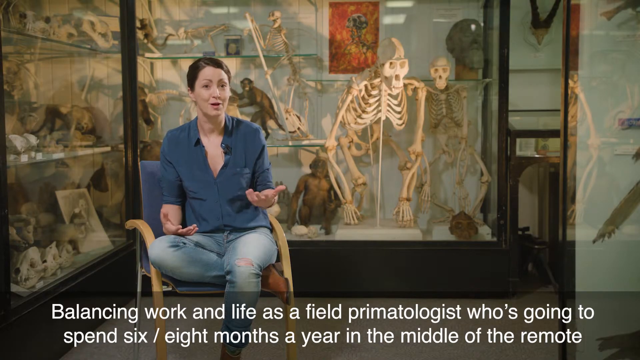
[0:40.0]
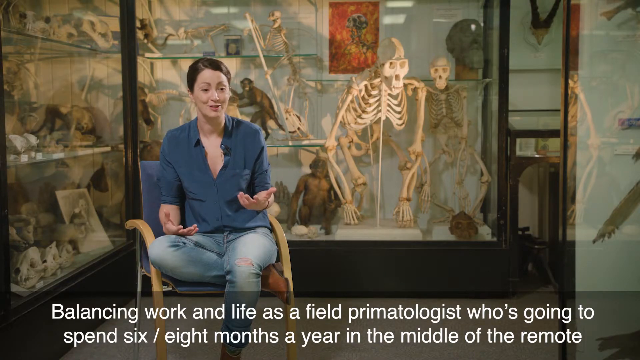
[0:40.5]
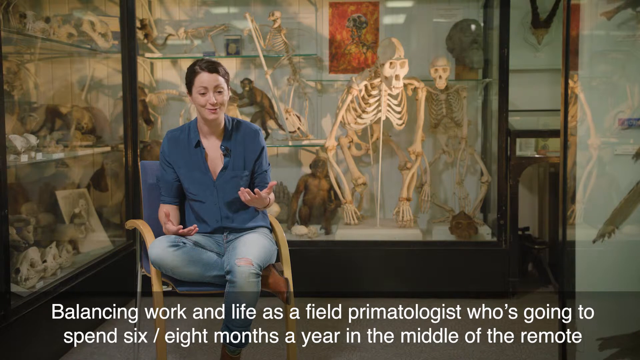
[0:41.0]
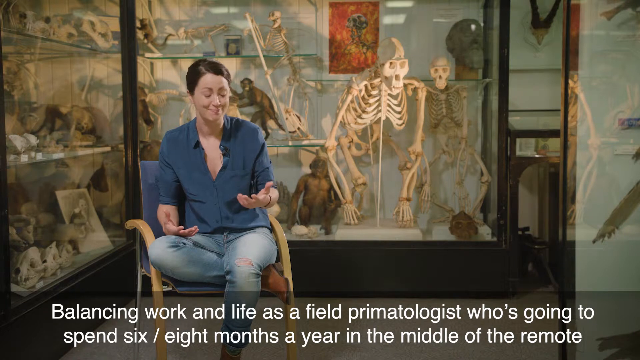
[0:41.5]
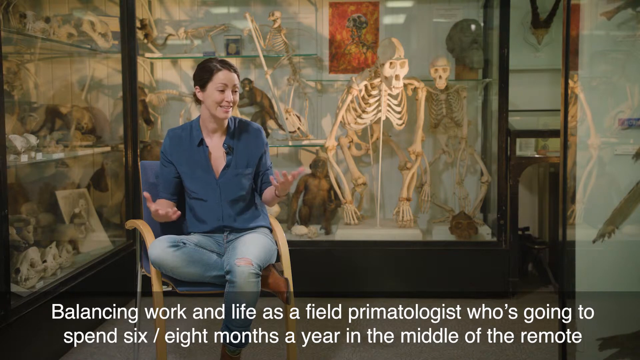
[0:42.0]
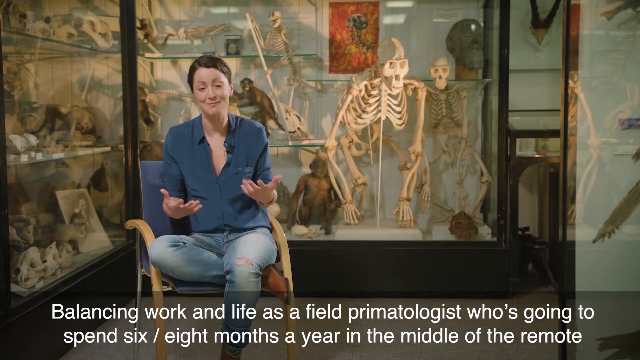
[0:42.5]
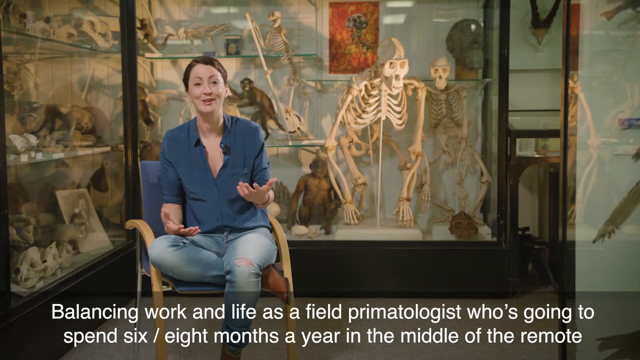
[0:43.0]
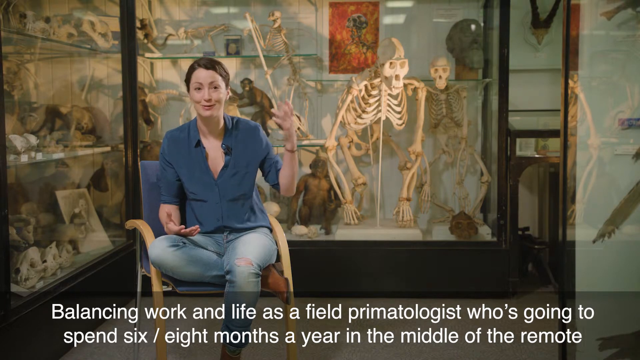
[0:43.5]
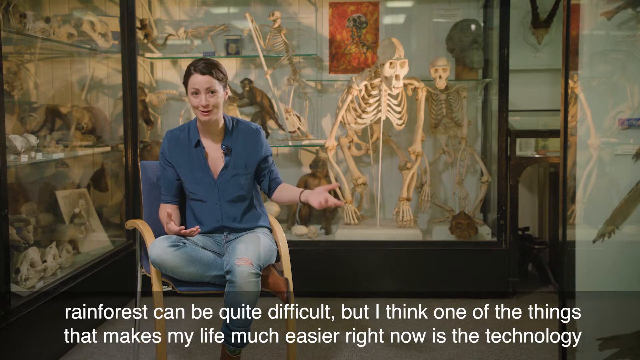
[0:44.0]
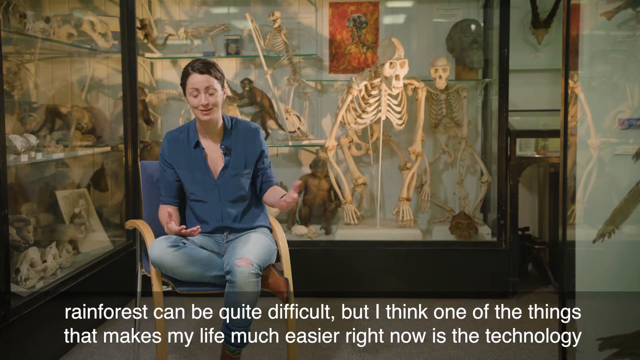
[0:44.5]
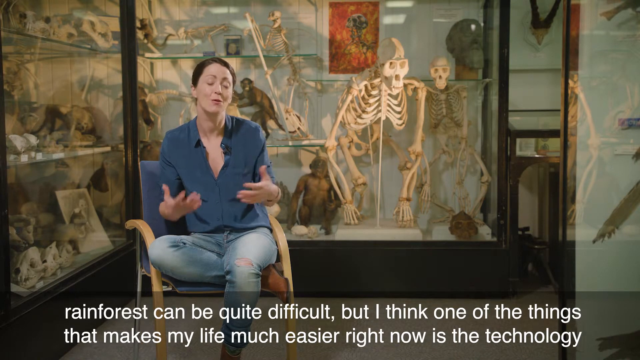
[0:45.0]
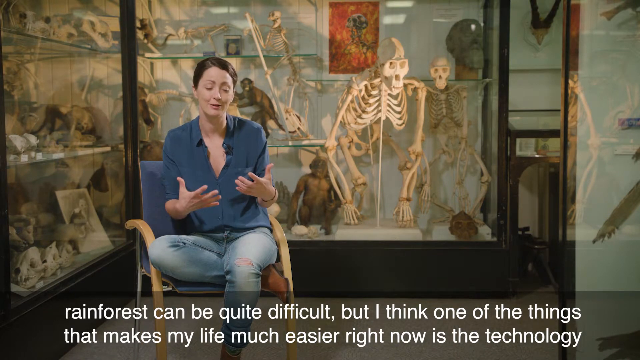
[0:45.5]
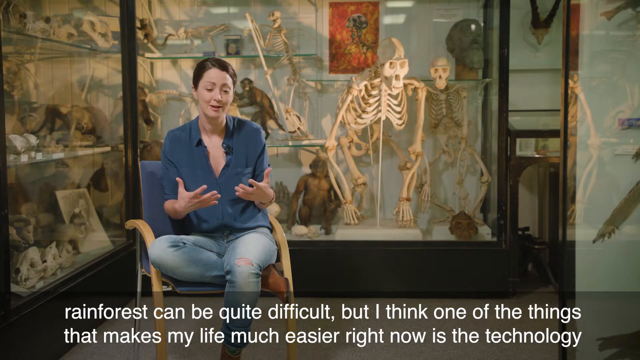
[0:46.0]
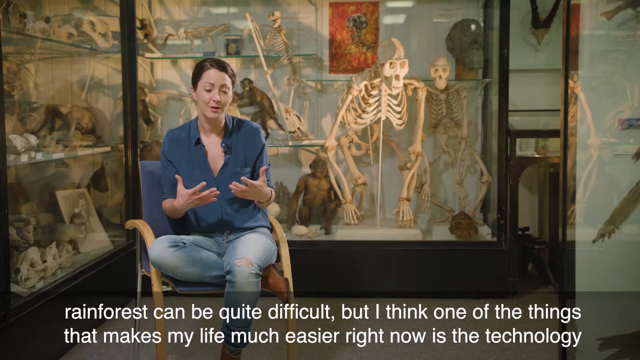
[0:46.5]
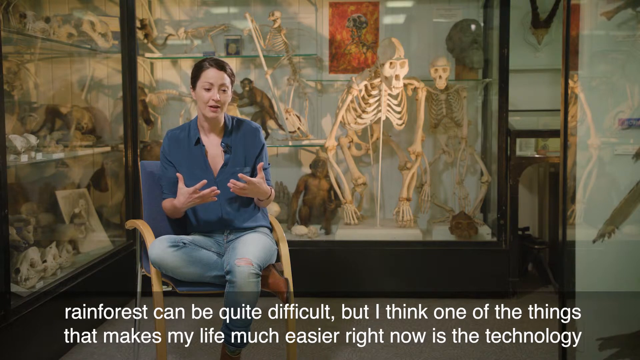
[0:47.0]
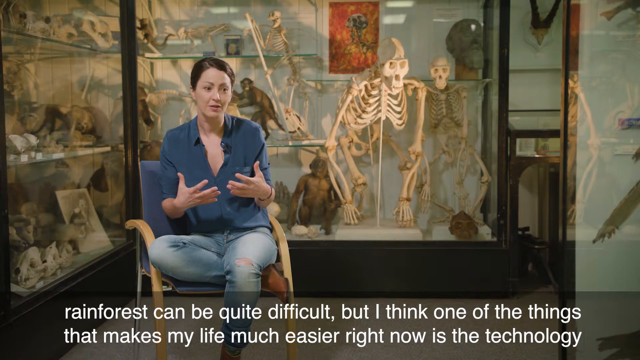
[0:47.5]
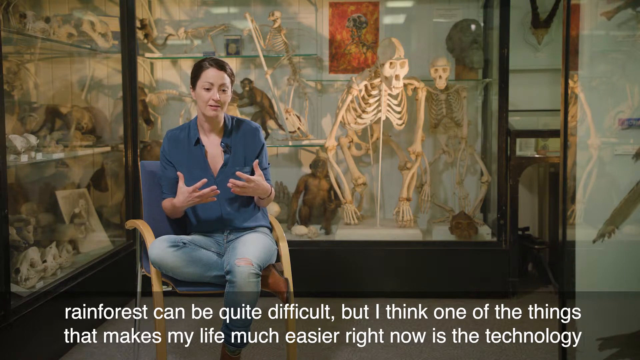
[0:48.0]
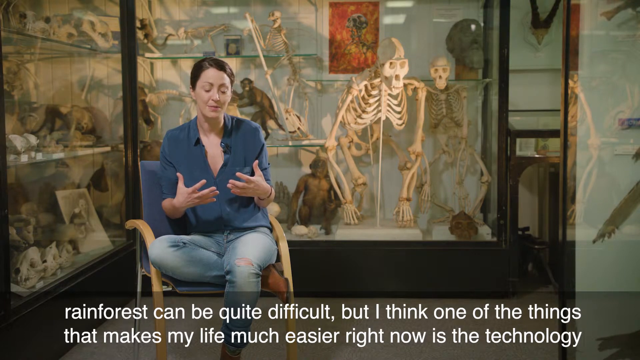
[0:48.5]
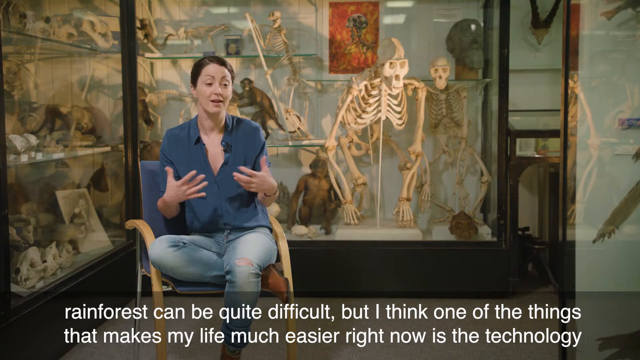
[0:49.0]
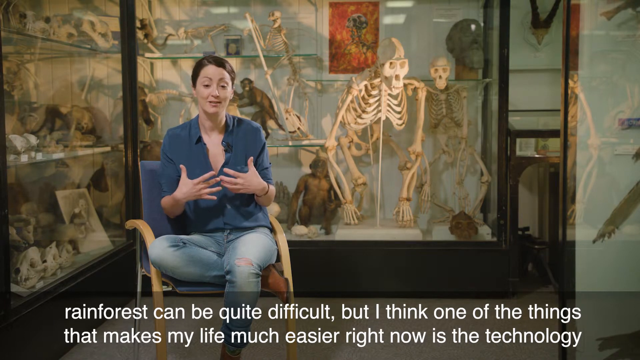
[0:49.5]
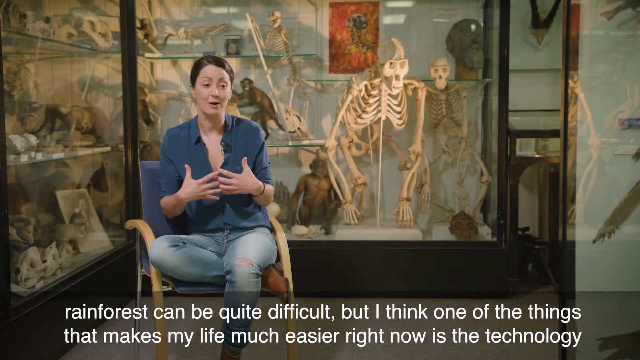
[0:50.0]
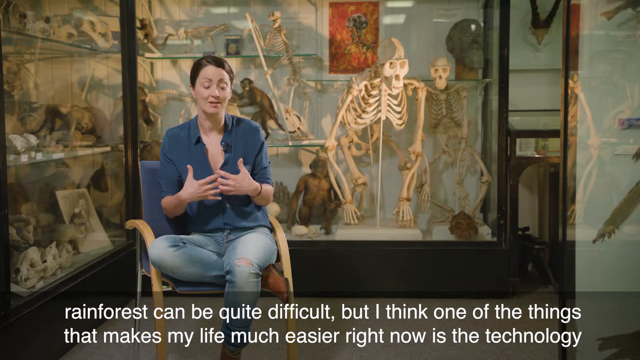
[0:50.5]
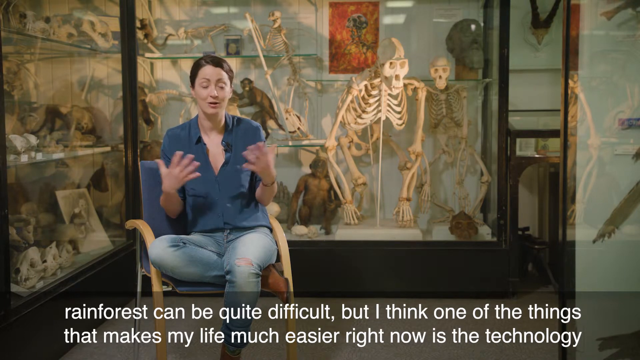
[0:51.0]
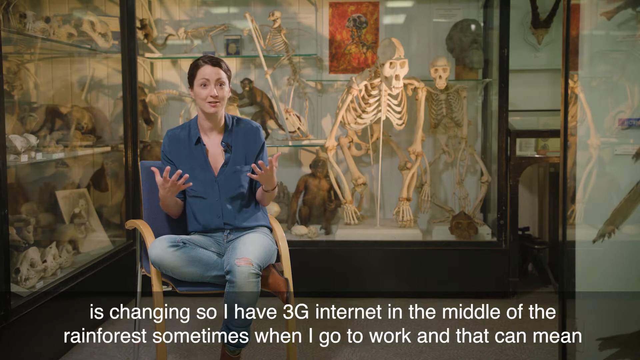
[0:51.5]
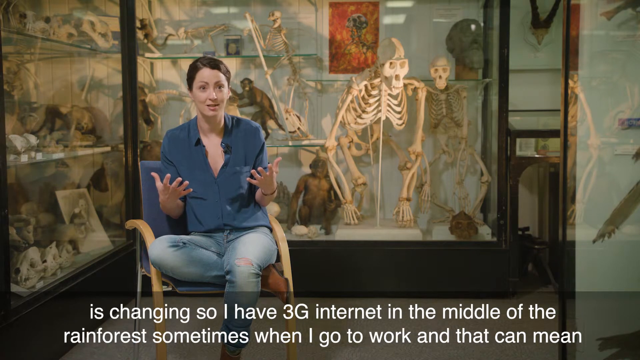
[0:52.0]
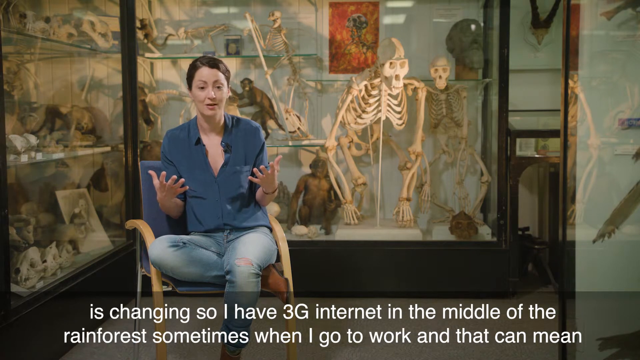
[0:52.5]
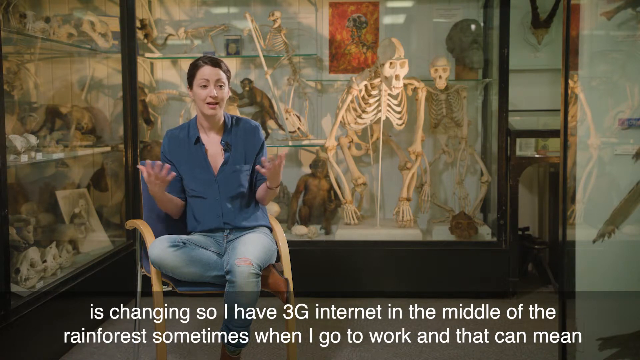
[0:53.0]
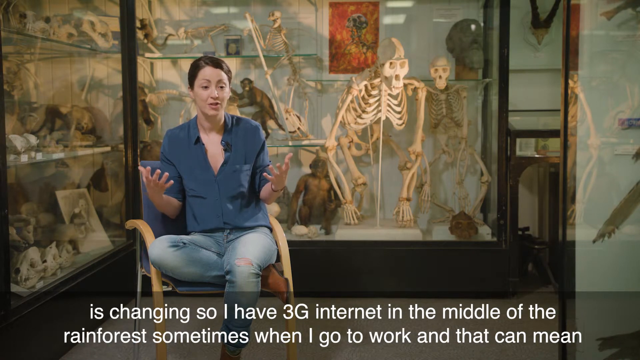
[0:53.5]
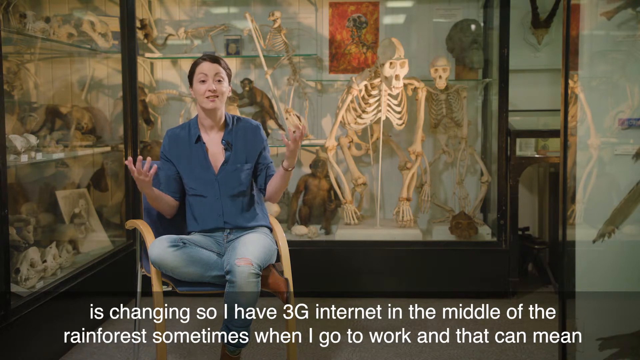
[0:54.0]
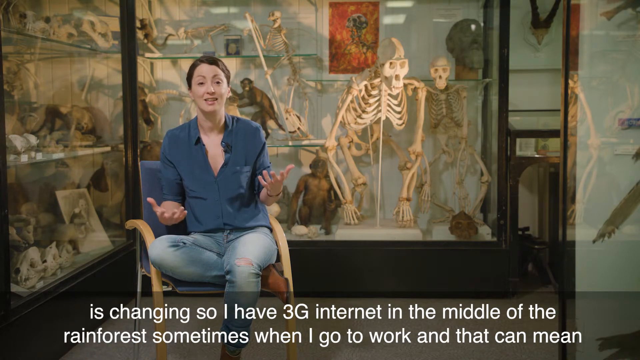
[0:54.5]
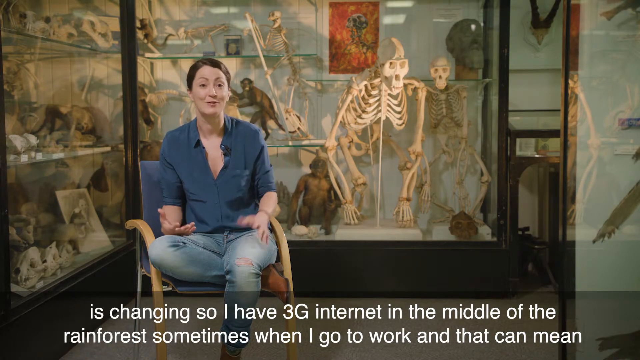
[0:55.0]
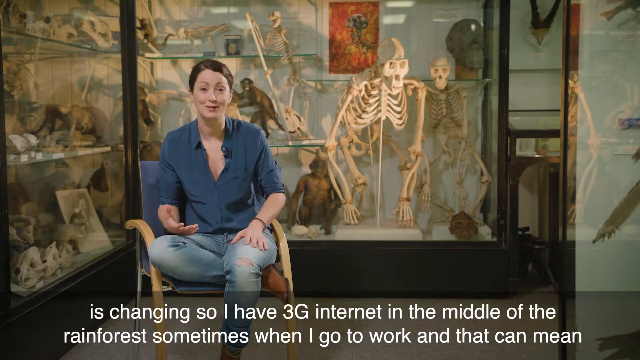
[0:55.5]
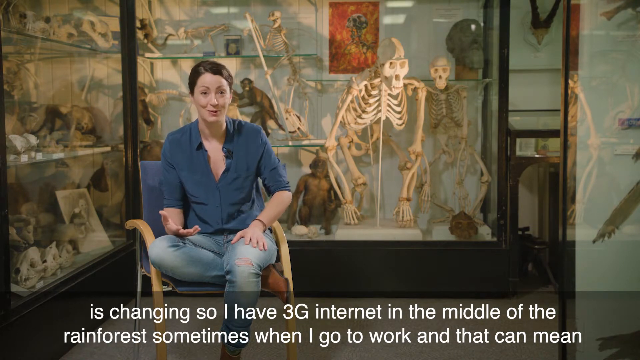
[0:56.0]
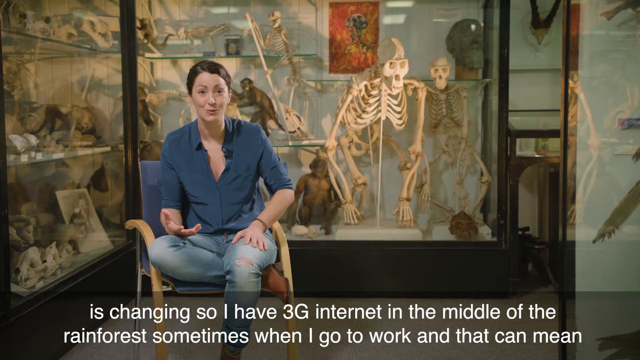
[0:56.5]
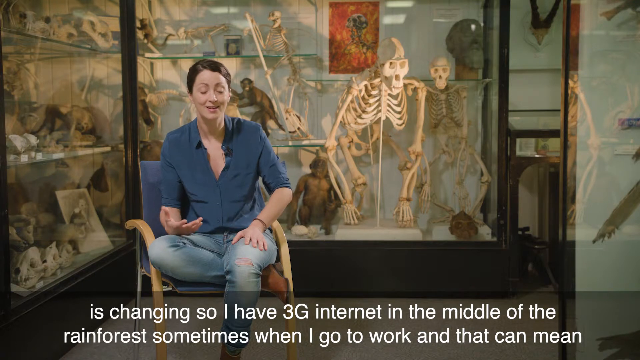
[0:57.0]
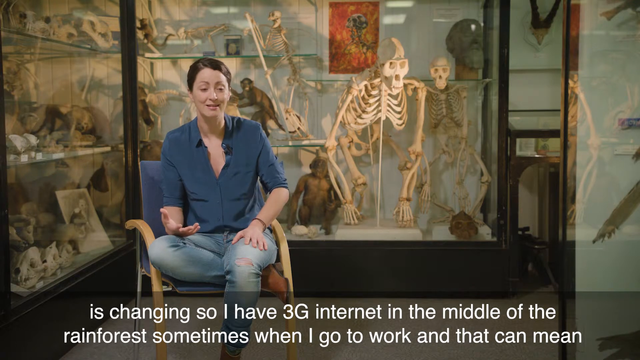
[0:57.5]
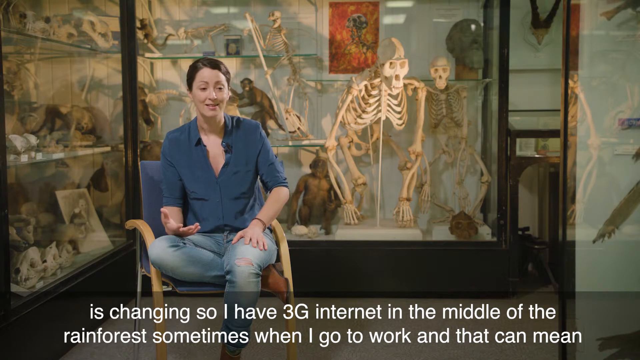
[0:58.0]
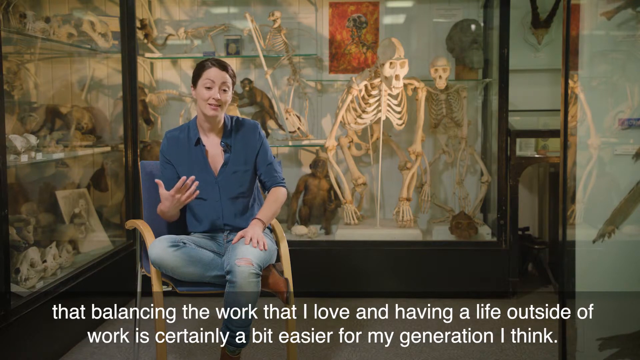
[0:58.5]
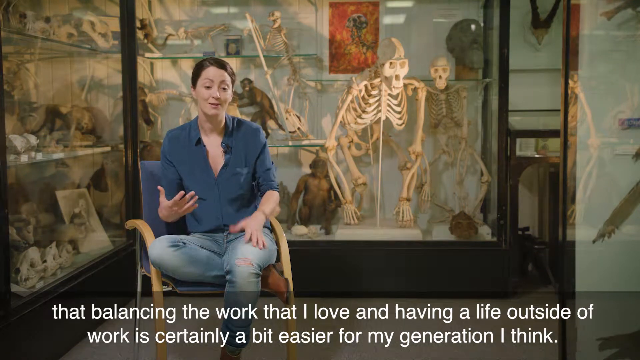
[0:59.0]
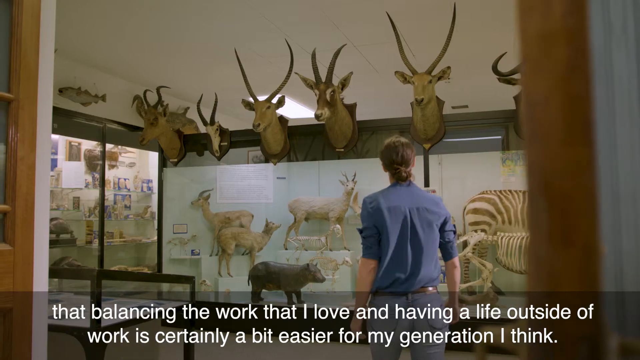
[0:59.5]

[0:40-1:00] A woman sits in a blue chair wearing a blue shirt, blue jeans, a black wristband on her left wrist and brown shoes. She has short brown hair with a hairband. Behind her is a display showing the bones and stuffed bodies of various apes and monkeys. A partially transparent dark gray text box at the bottom holds white text reading "Balancing work and life as a field primatologist who's going to spend six \ eight months a year in the middle of the remote". She seems excited as she speaks. Her gaze falls a little as she holds her left arm at chest height in front of her and her right arm on her right thigh, palms facing up on both hands. She shrugs, turns her head to her left and keeps smiling as she speaks. Her gaze then rises toward the camera, and she raises her left arm up and to her left, pointing toward the ceiling, before bringing it down to chest level. The text changes to "rainforest can be quite difficult, but I think one of the things that makes my life much easier right now is the technology." She makes a circular motion to the left with her left arm, then alternates circular motions with both hands around the middle of her chest as she looks down and continues speaking. She stops and looks to the lower right of the frame, her eyes widening for a moment before returning to normal. She blinks and motions toward her own chest with the fingers of both hands outstretched, her fingers crossing and interlocking a little at the center of her chest as she continues to speak and blink. She then throws both hands out in front of her, eyes widening. The white text at the bottom changes to "so I have 3g internet in the middle of the rainforest sometimes when I go to work and that can mean". She continues to motion with her hands up and down slightly while facing the camera, her shoulders tight, smiling as she speaks excitedly. She brings her left hand down palm down onto her left thigh, with her right hand palm up on her right thigh and her right leg crossed under her left leg in the chair. She leans forward a little with a relieved look as she continues to speak, then raises her right arm as the text changes to "that balancing the work that I love and having a life outside of work is certainly a bit easier for my generation I think." The woman in the blue shirt is then seen from behind walking toward the left side of a room full of displays of antelopes, gazelles, deer, bison and similar creatures.